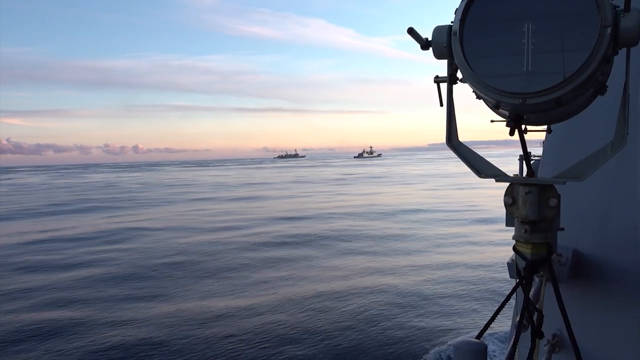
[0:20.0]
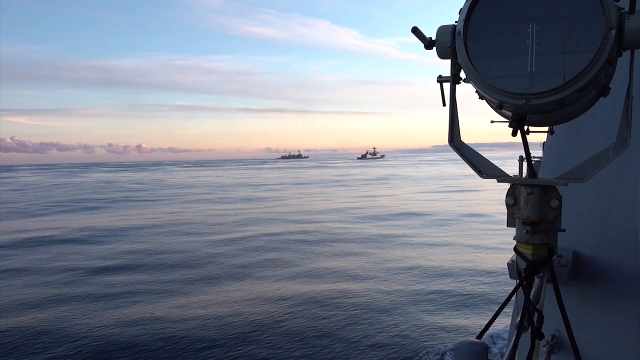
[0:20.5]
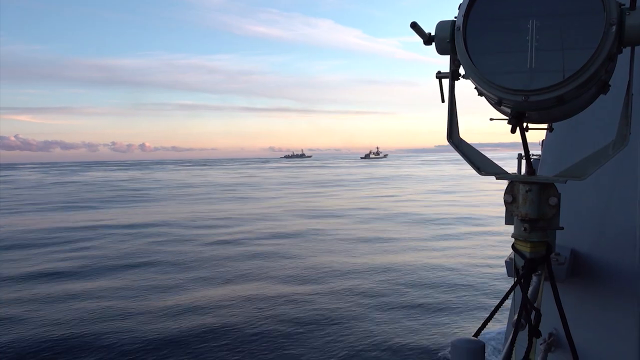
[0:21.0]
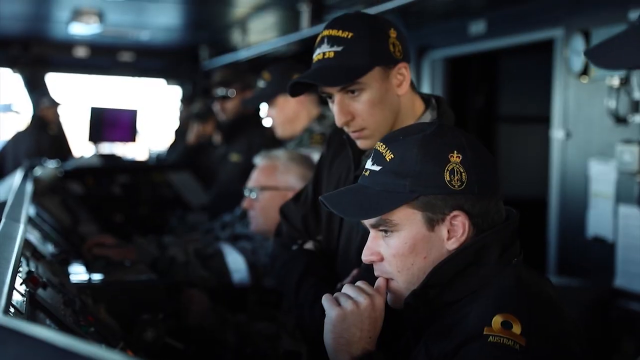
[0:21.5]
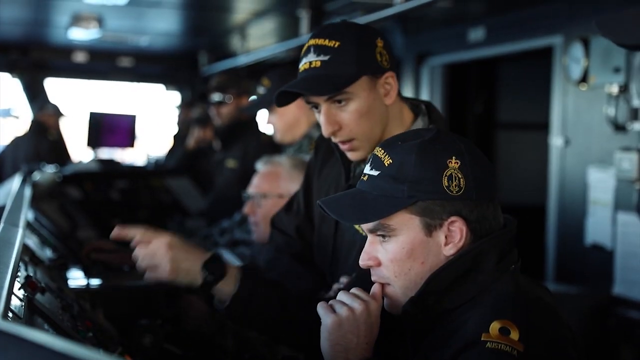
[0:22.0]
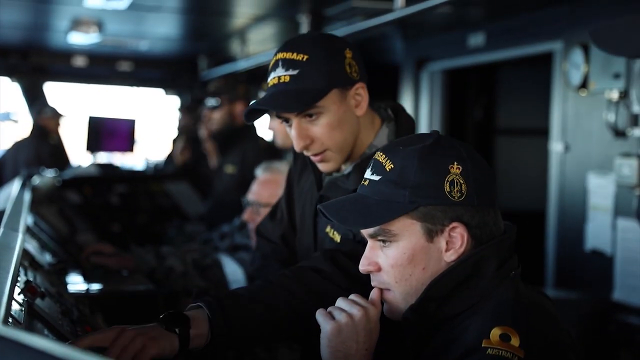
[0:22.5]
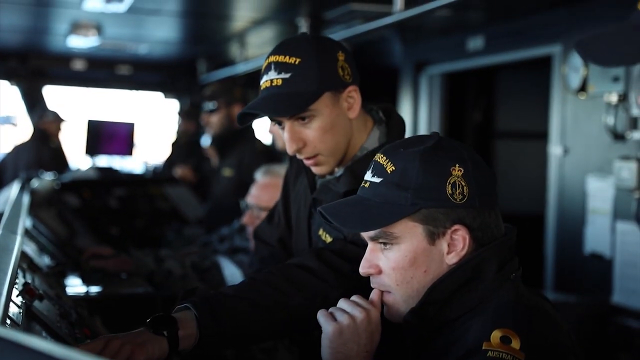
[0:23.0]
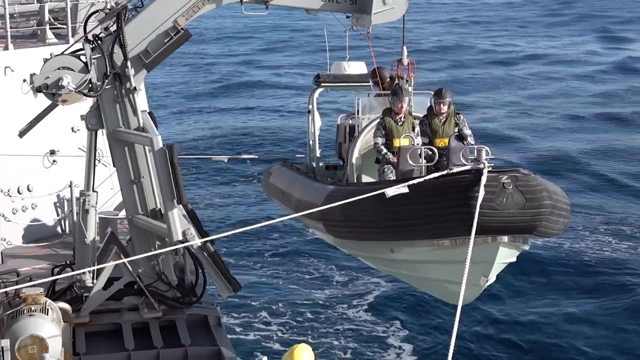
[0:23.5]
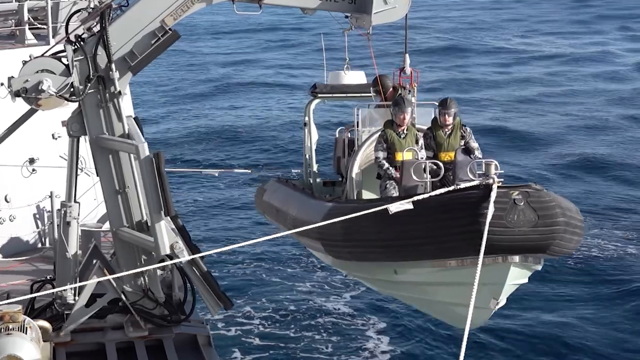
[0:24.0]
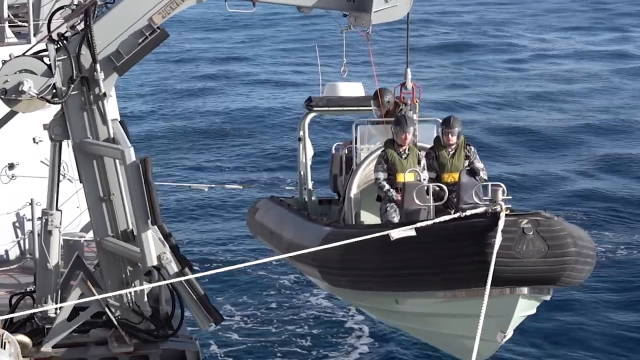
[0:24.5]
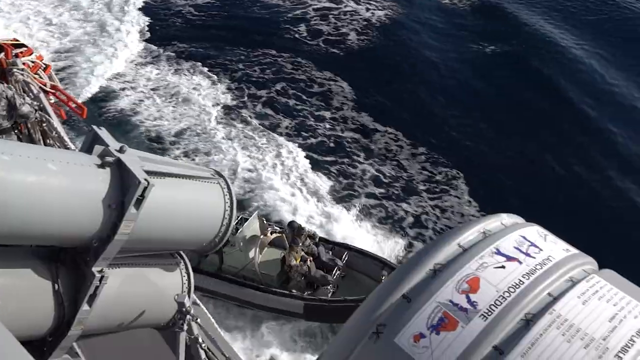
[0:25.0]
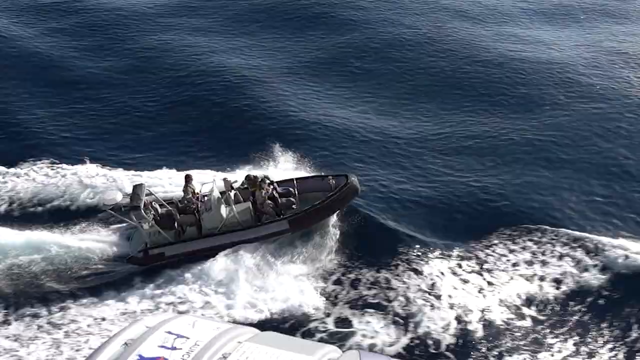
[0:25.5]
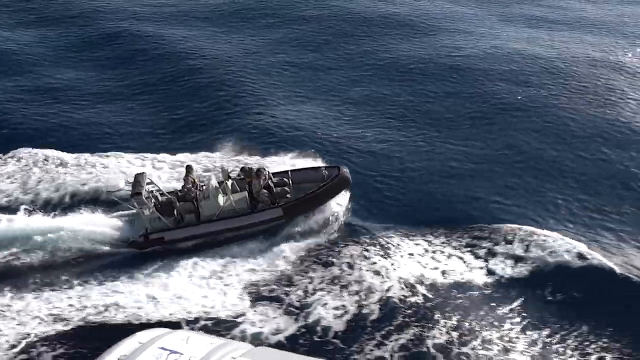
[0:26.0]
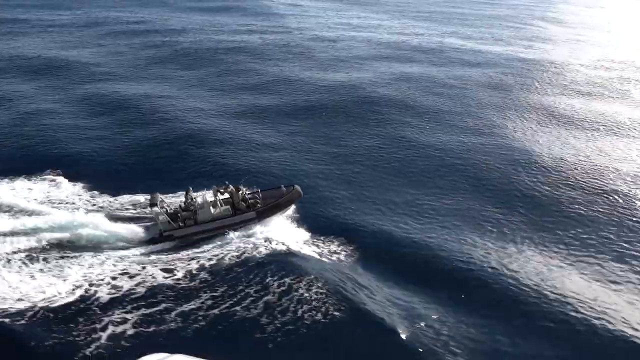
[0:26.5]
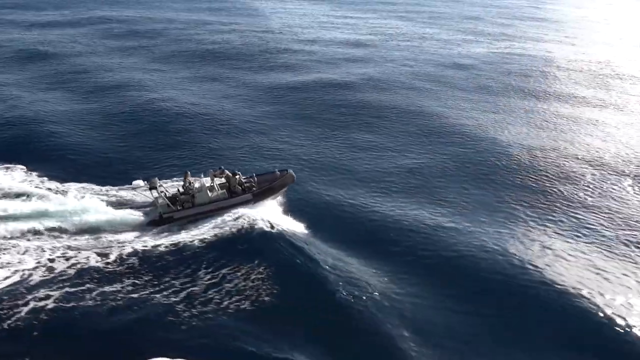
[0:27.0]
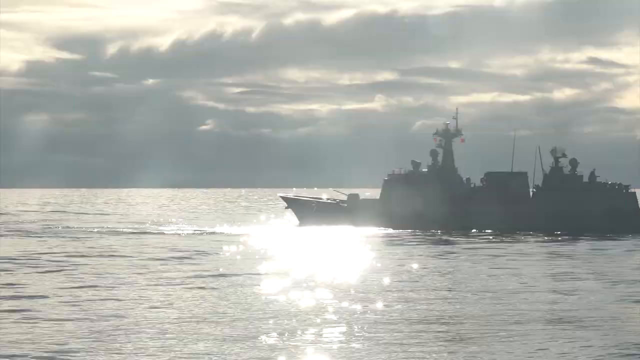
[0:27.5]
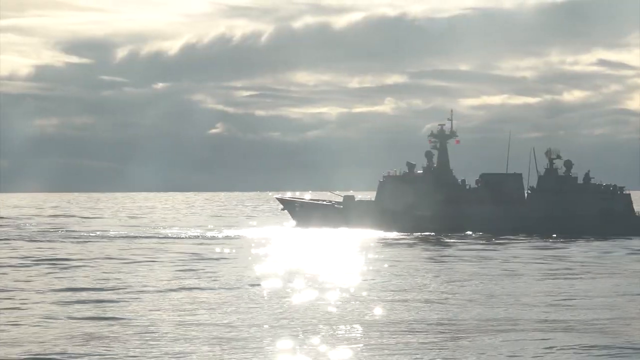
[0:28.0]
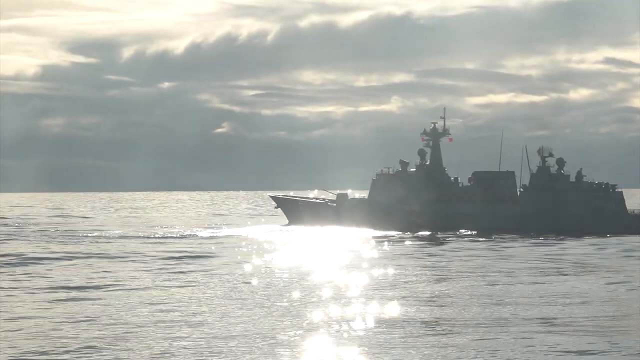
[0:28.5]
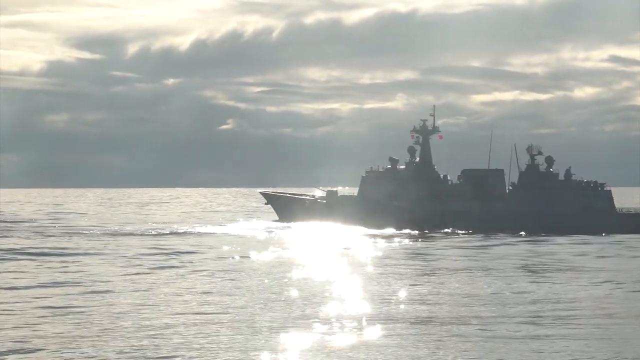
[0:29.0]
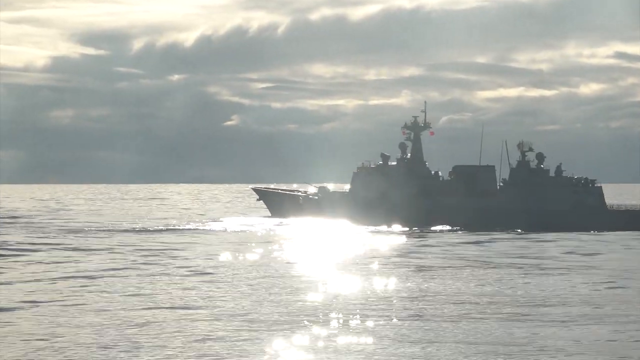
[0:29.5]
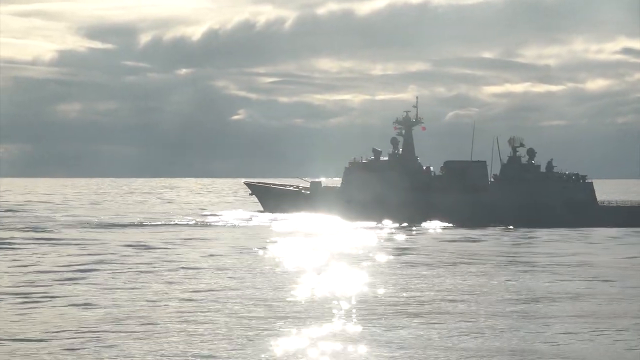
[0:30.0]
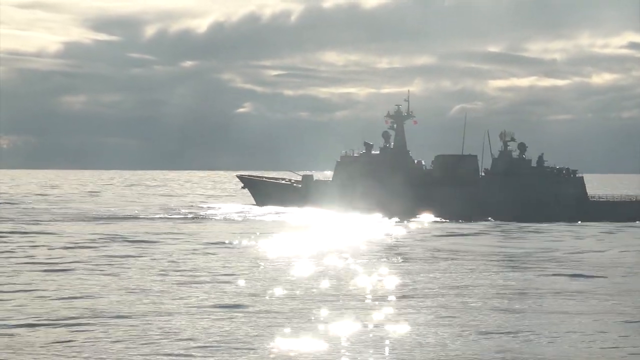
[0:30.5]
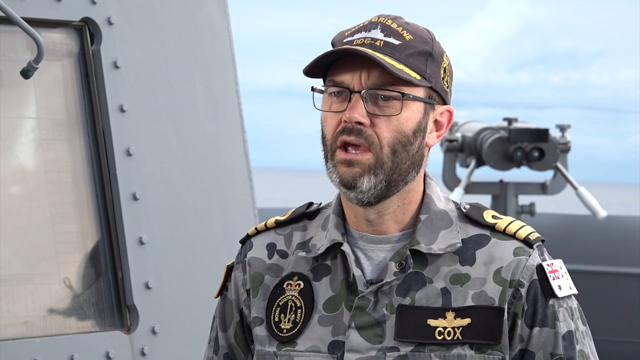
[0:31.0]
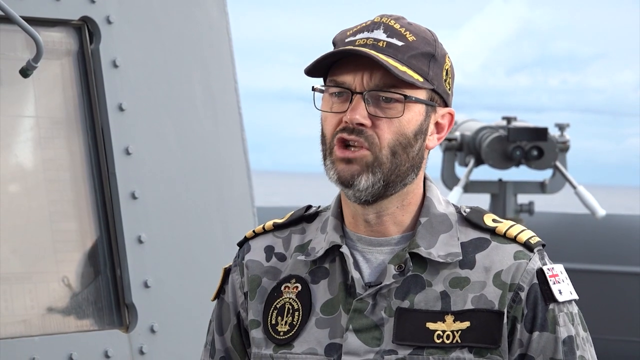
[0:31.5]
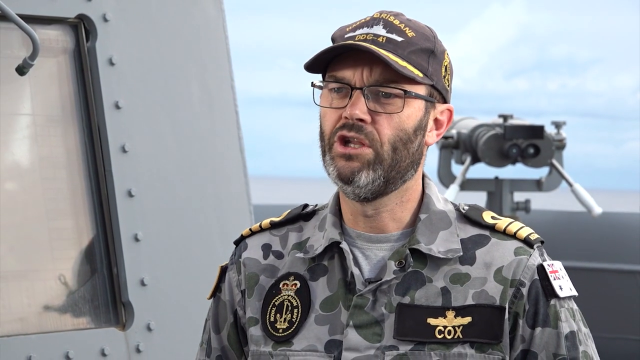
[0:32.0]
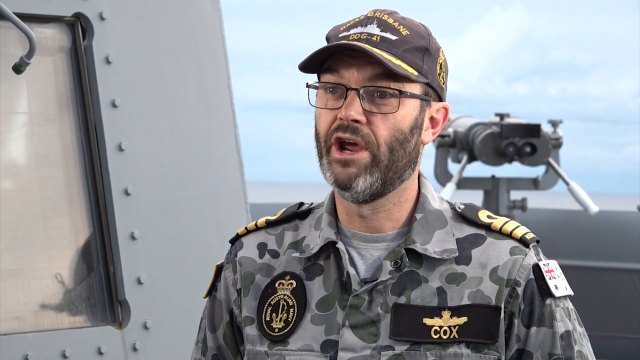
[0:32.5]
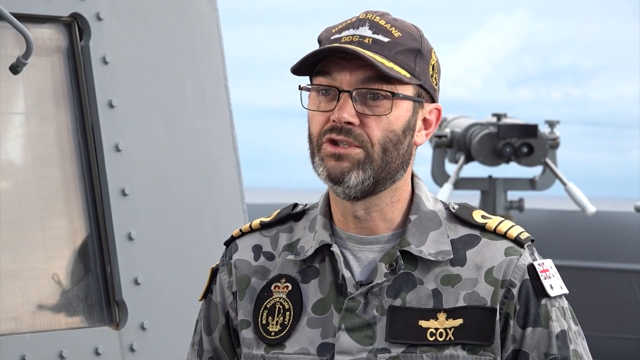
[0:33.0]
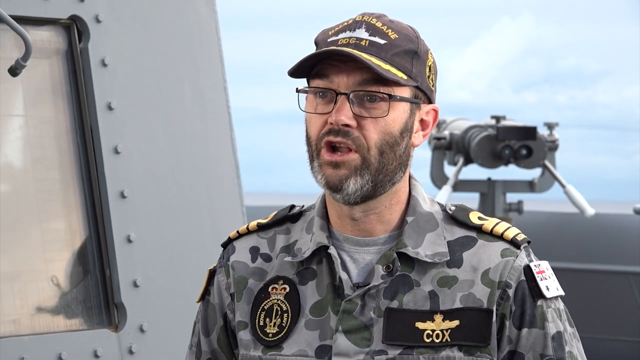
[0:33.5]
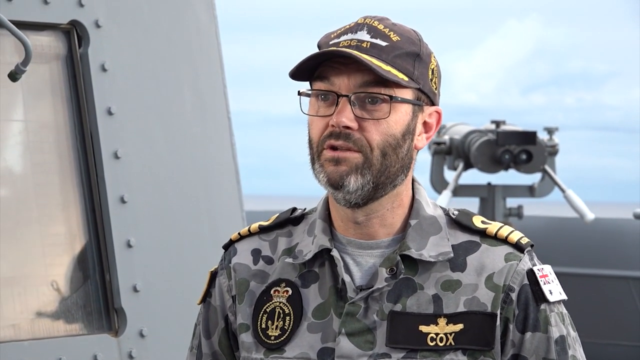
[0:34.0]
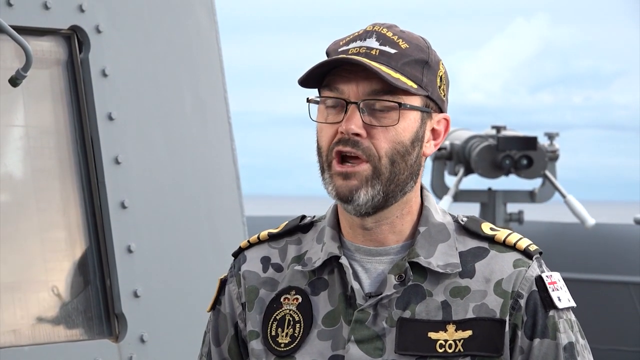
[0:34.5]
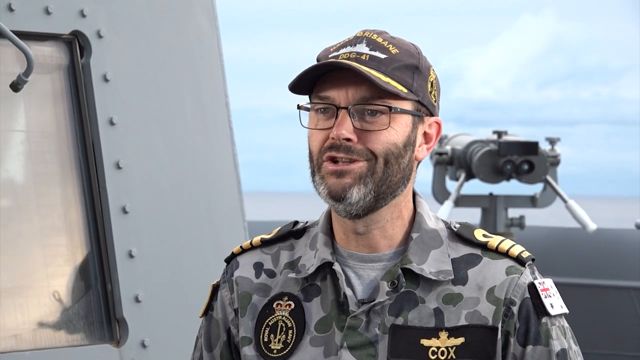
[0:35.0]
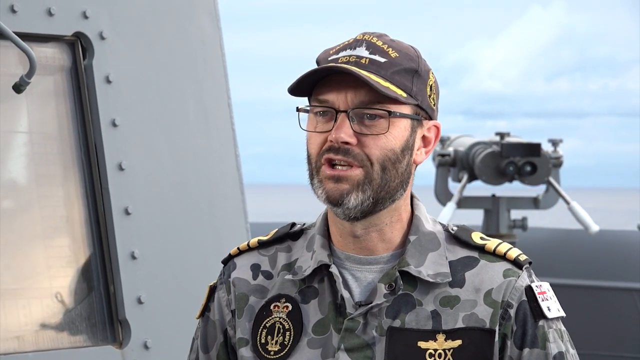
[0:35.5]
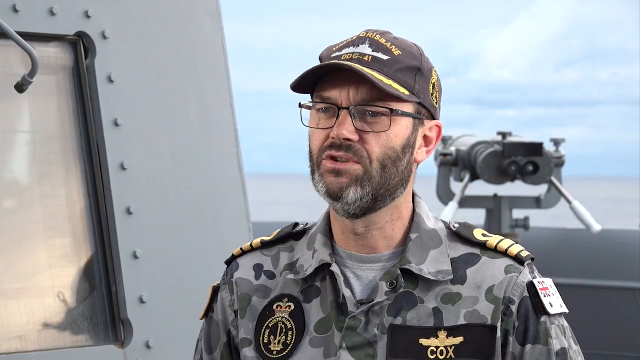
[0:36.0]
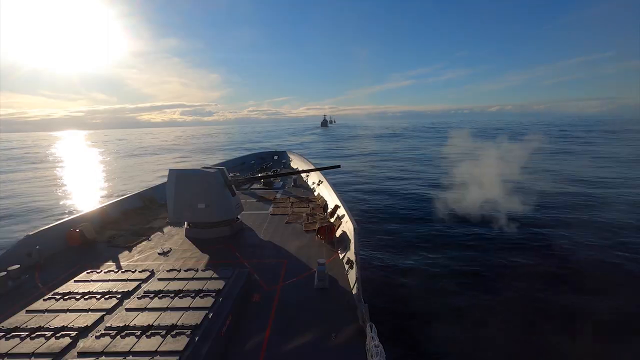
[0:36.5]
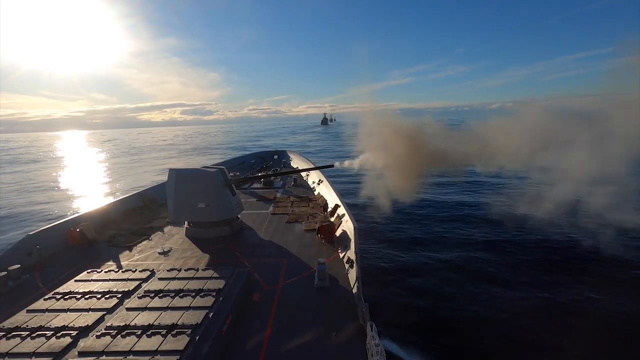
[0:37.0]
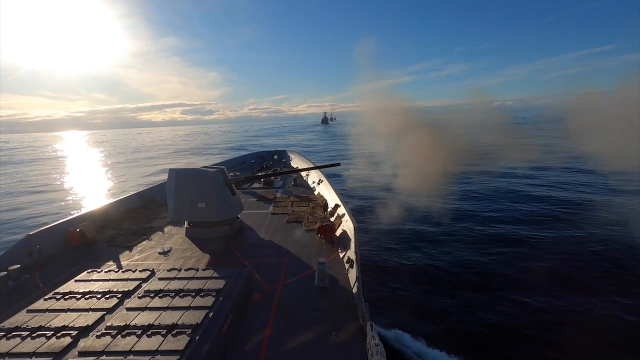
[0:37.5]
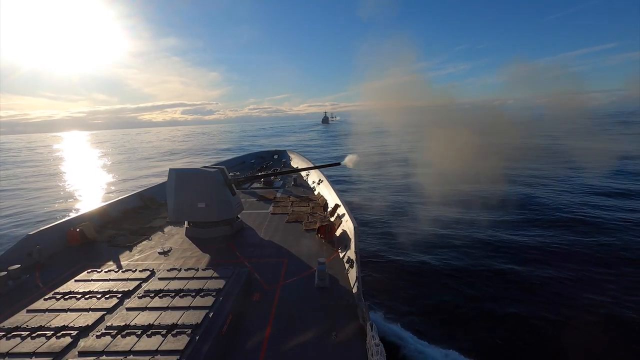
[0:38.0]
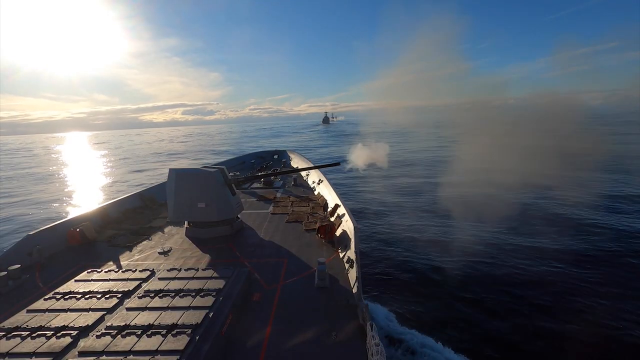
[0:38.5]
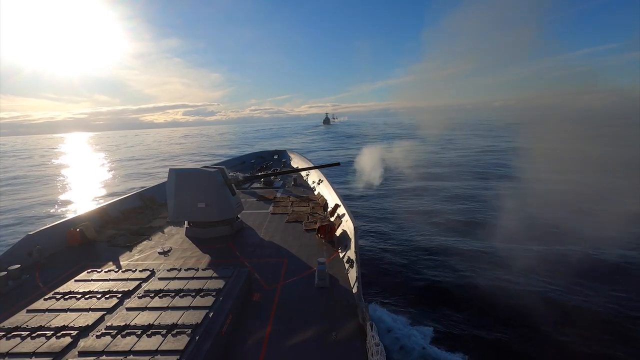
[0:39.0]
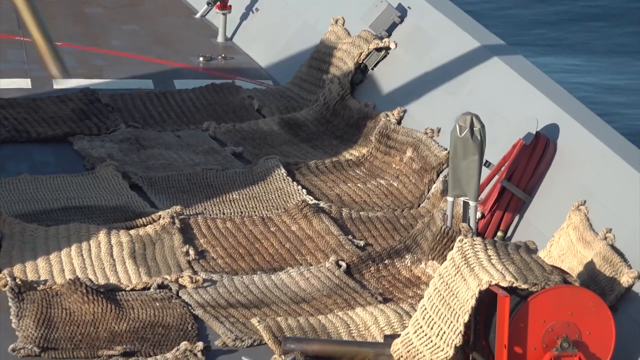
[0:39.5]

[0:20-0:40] The camera looks out from a ship to other, smaller ships on the sea. Several men in black caps and uniforms look to be in front of a ship's navigation system. Outside the ship, it looks like a smaller boat is being dropped off the ship into the sea, and the smaller boat then takes off quite fast through the sea, the water parting in a white splash. The scene changes to a side view of a large ship under a very cloudy sky, with the sun glistening on the sea, making the ship appear in shadow. A man talks directly to the camera; he has the name Cox on his uniform, apparently his last name, and "Brisbane" can be made out on his cap. The scene changes to the bow of a ship with the sun glistening on the sea in the background. A side-on view shows one of the cannons being fired, with a lot of black or grey smoke coming from the front, and briefly what looks to be a used shell going onto the deck of the ship.